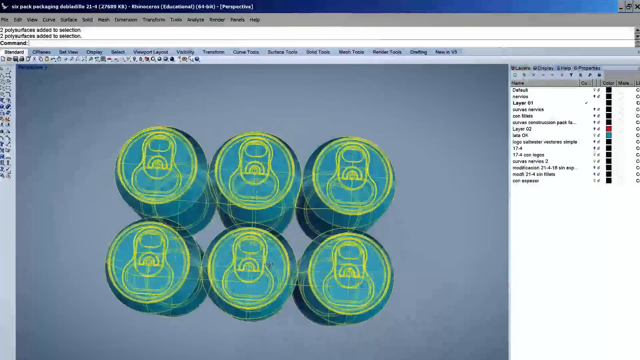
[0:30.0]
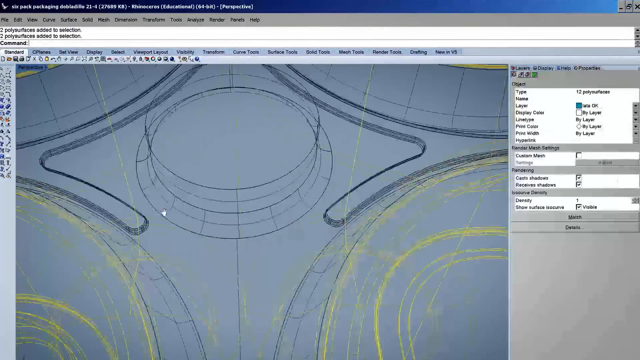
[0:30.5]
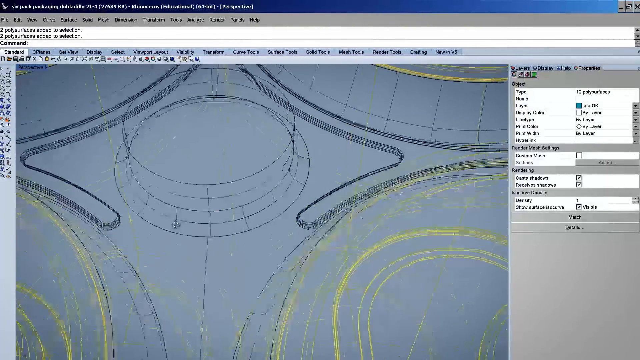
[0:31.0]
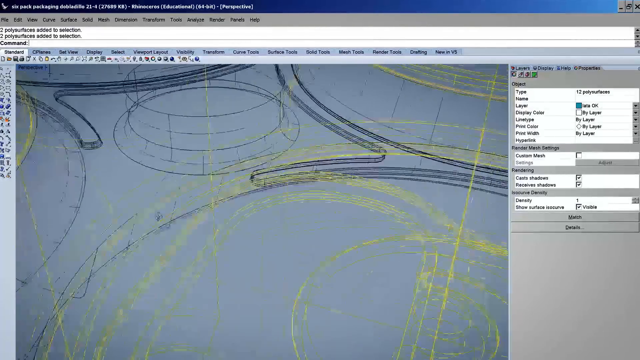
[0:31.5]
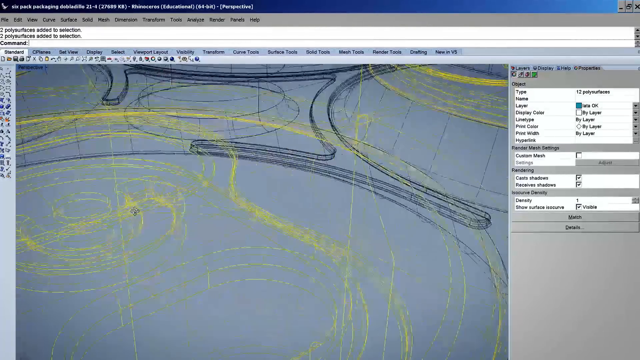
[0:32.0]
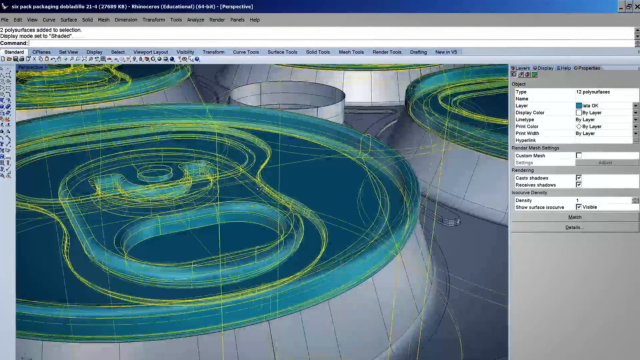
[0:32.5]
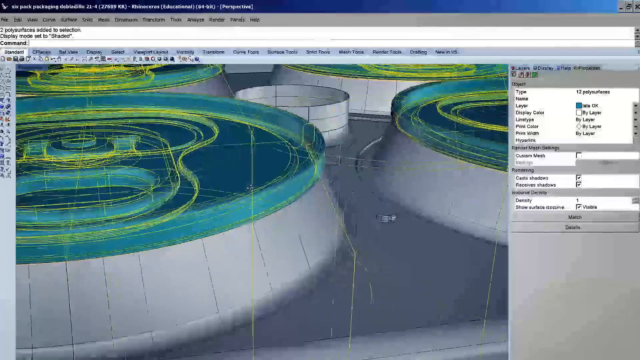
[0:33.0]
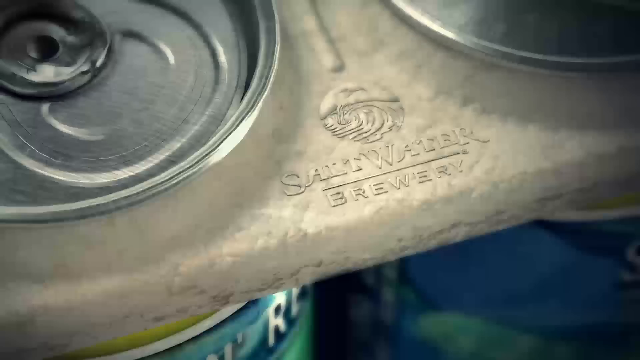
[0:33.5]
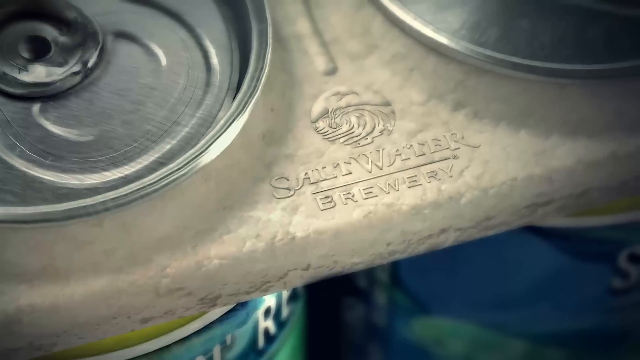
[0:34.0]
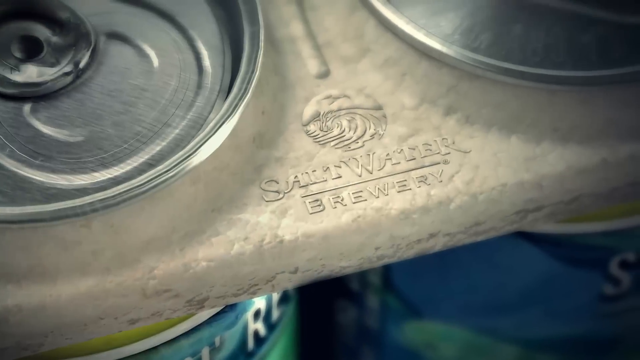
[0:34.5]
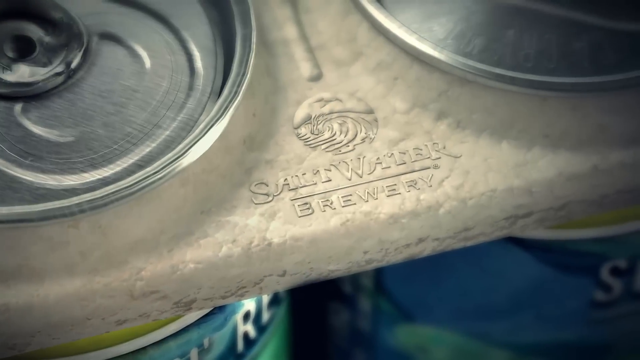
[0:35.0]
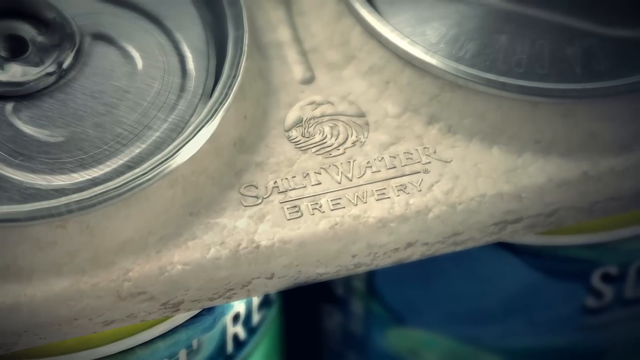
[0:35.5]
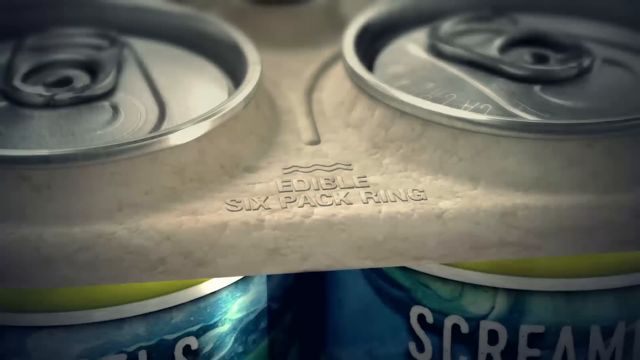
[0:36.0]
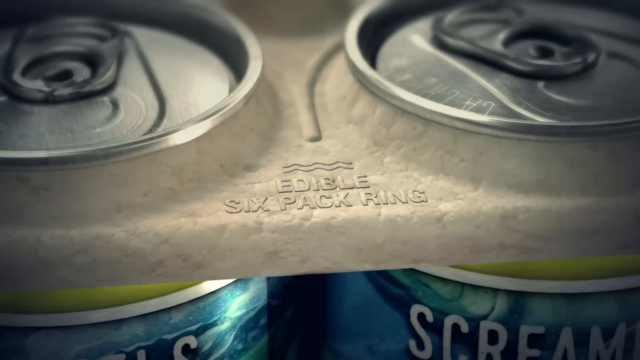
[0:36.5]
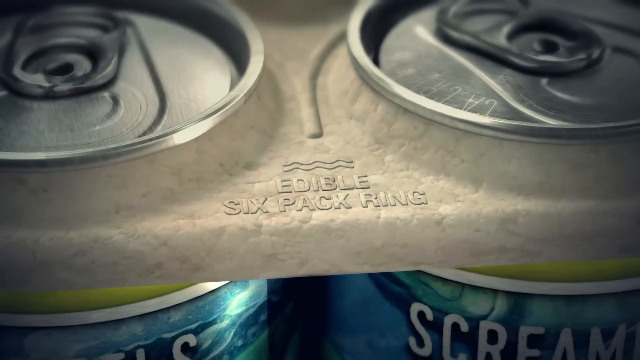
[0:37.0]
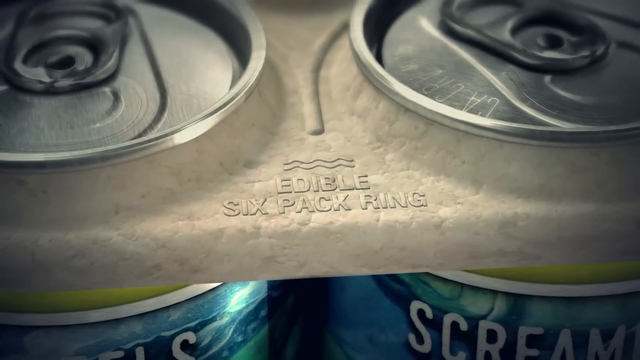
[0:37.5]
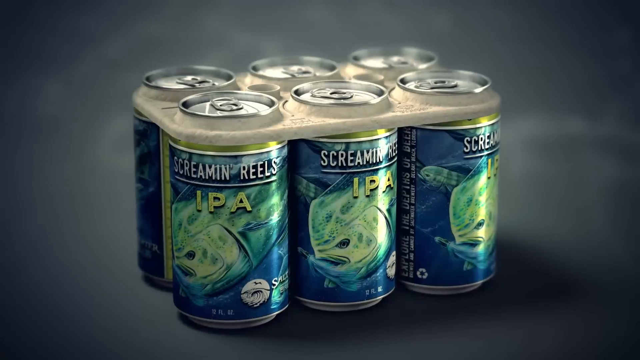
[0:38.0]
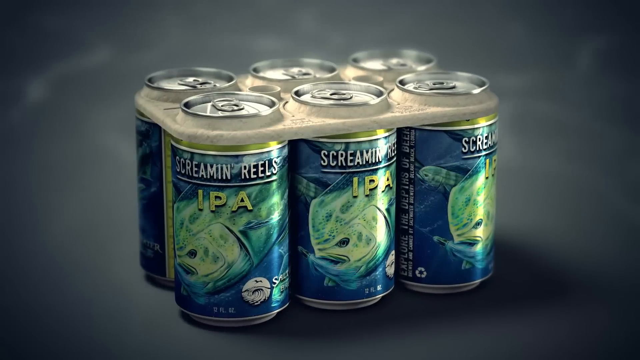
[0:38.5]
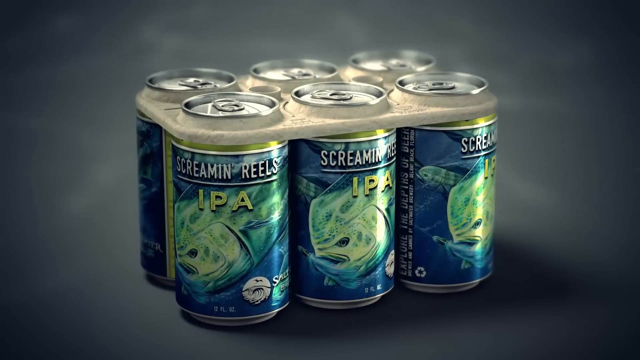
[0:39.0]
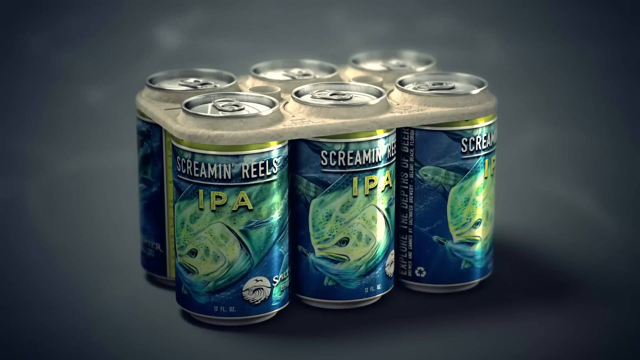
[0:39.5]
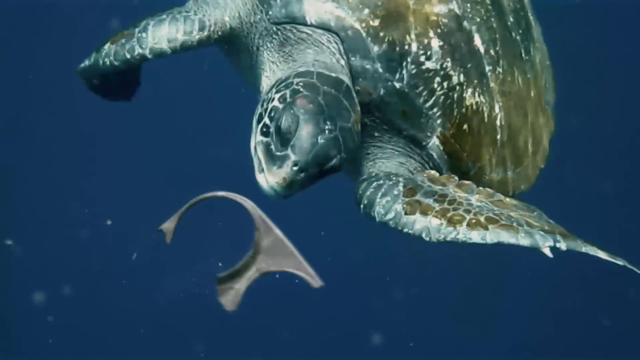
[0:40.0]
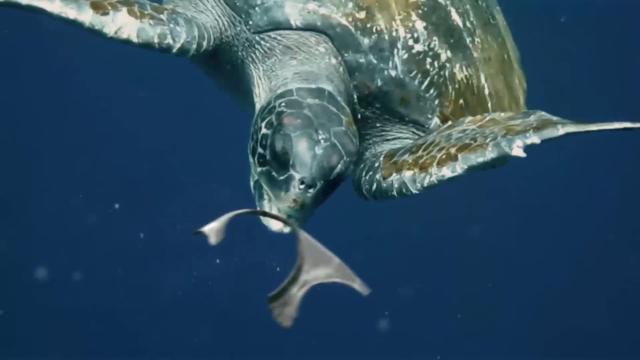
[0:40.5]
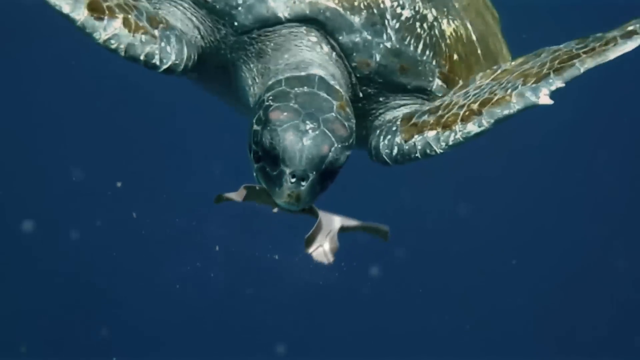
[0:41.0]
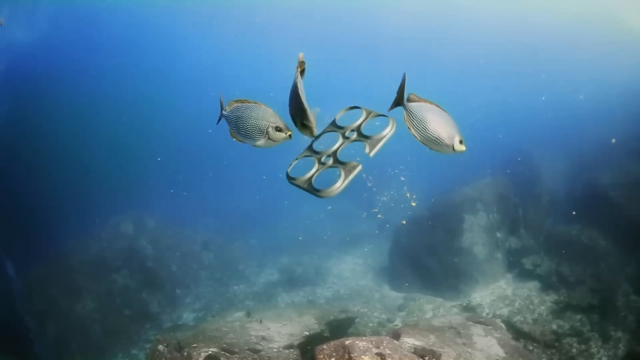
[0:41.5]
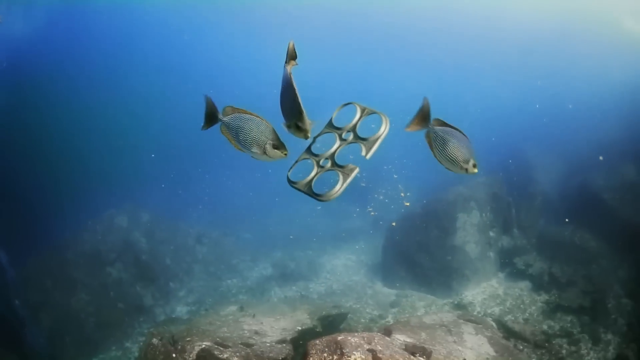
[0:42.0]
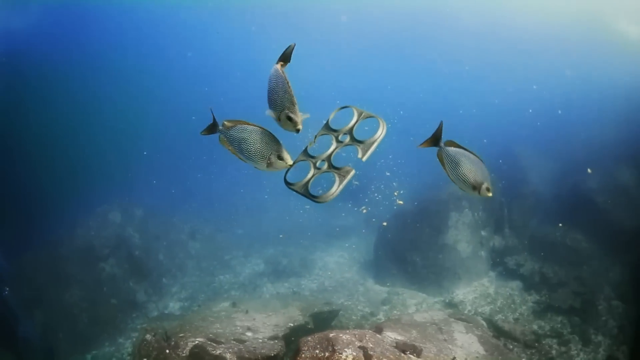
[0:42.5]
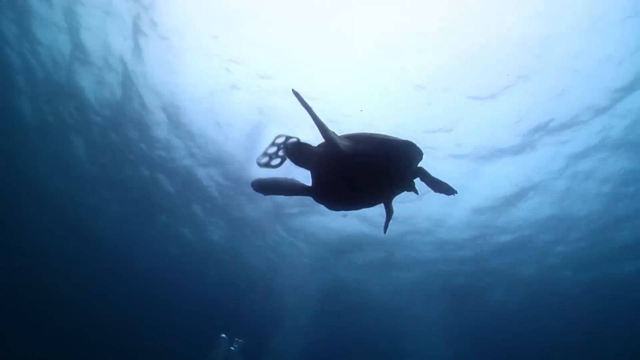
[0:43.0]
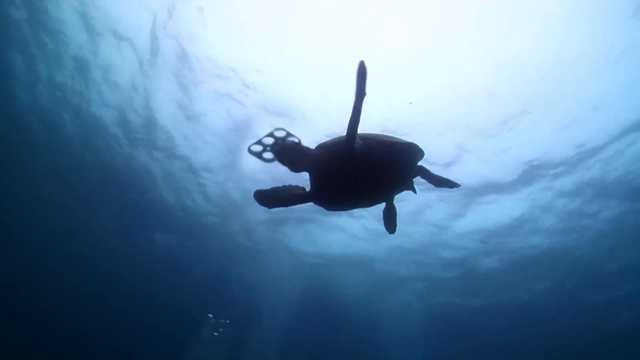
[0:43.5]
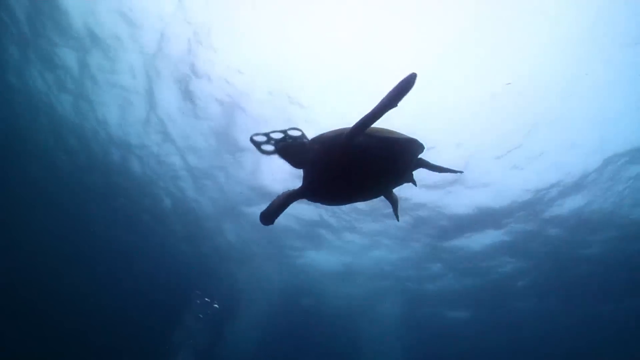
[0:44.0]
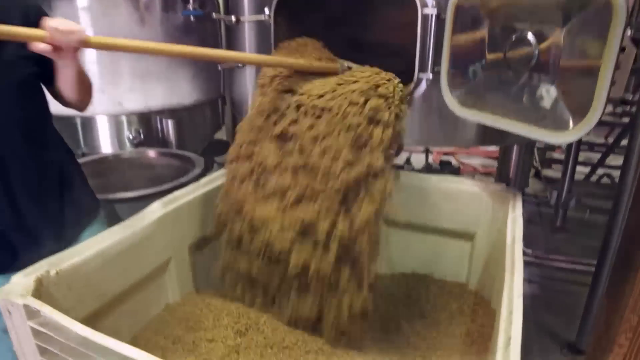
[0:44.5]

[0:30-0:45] The CAD program appears again, seemingly generating edible beer rings, and turtles are seen eating them. People are shown working with grains. The turtle and the fish eating the rings look digitally modified, and the computer-generated cans also look heavily modified and digital.